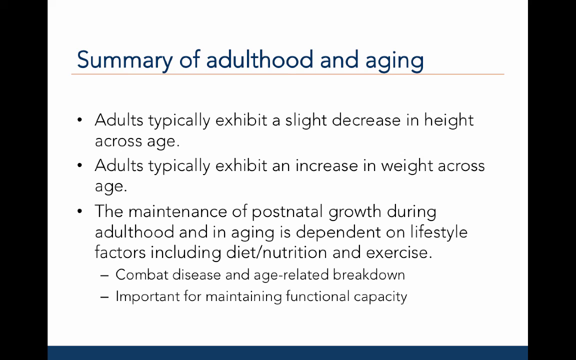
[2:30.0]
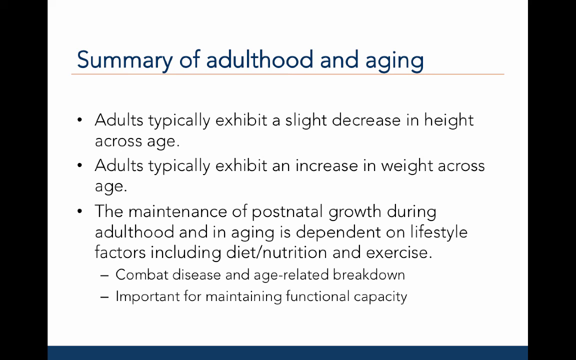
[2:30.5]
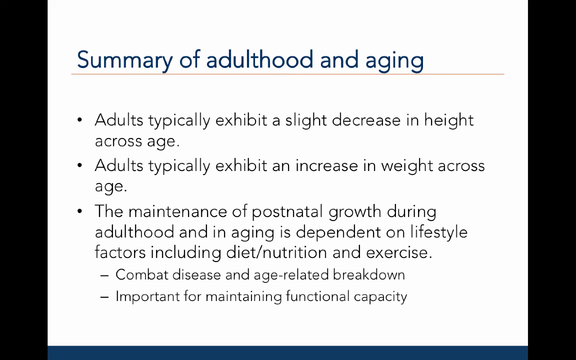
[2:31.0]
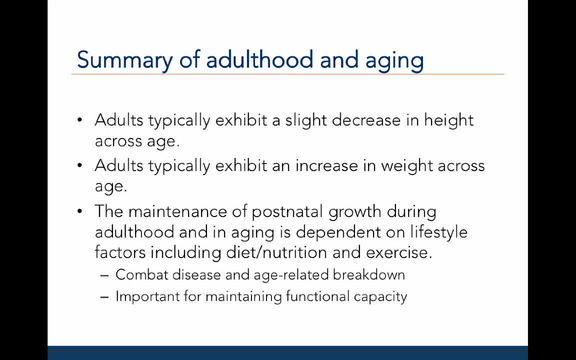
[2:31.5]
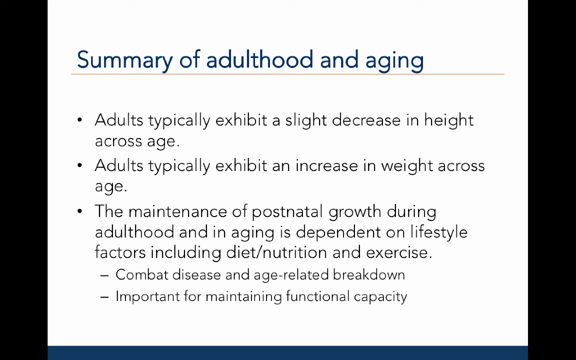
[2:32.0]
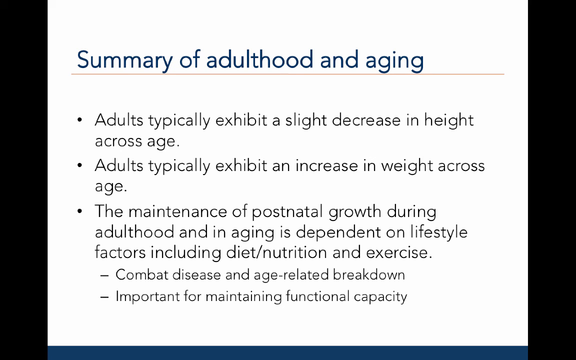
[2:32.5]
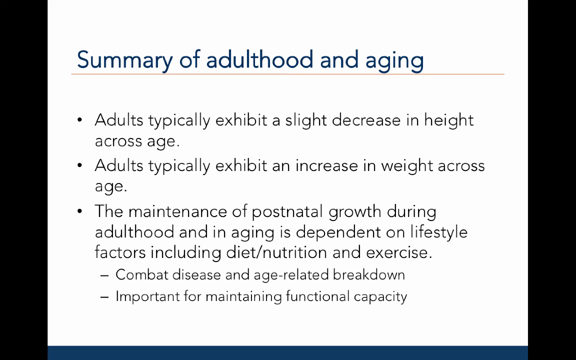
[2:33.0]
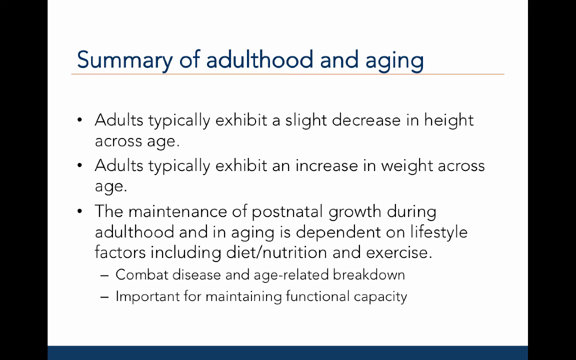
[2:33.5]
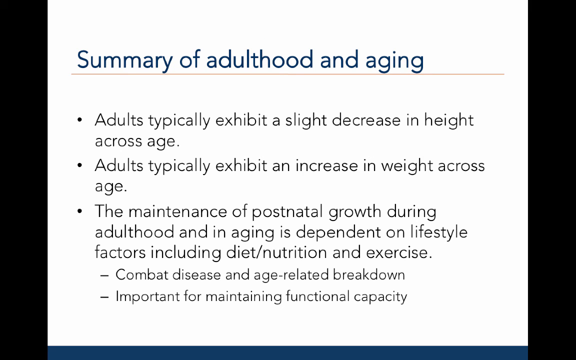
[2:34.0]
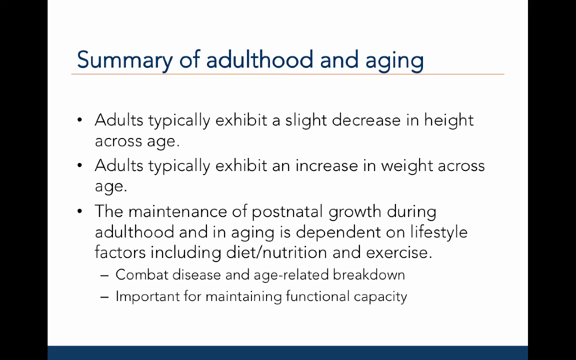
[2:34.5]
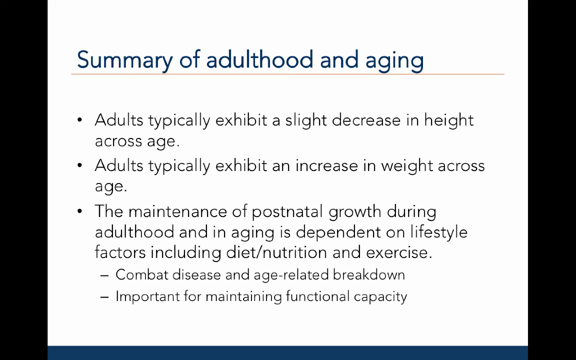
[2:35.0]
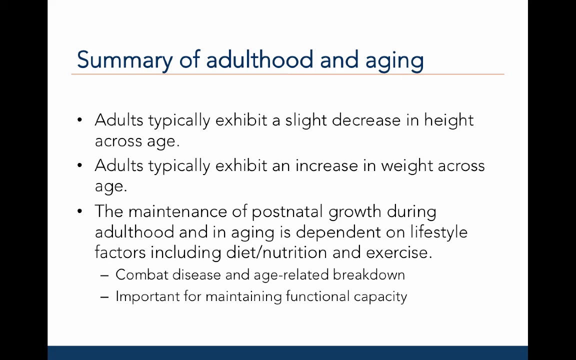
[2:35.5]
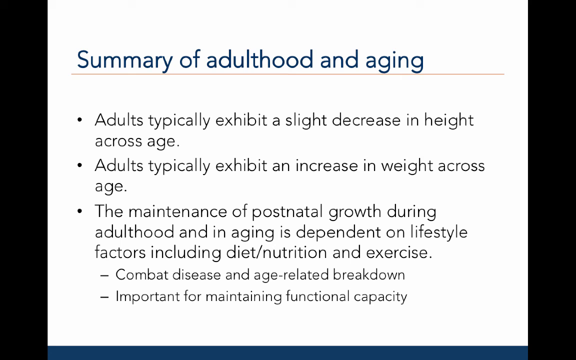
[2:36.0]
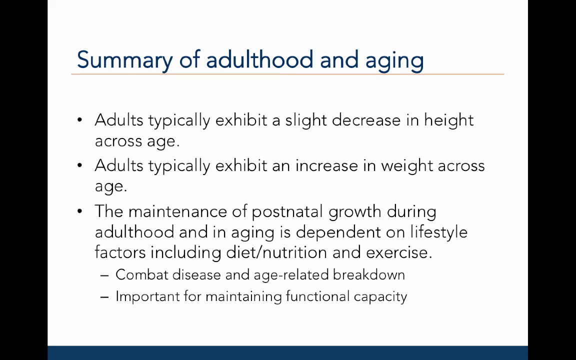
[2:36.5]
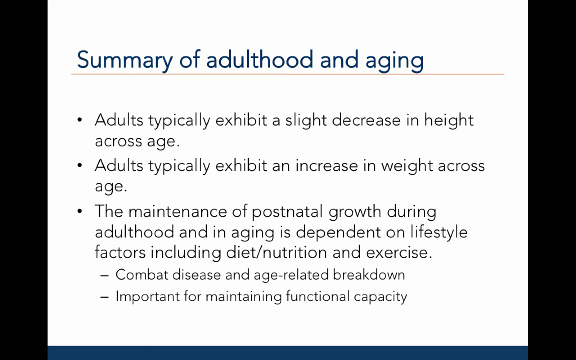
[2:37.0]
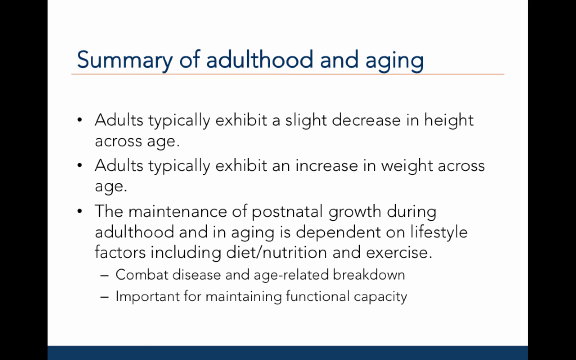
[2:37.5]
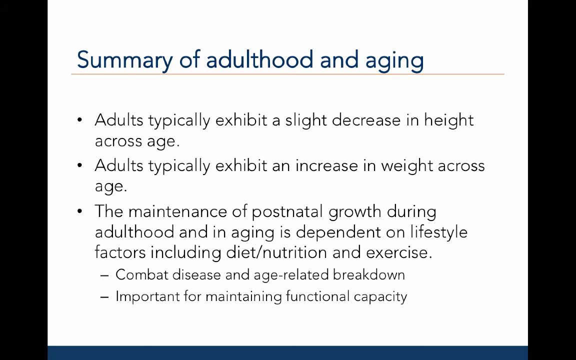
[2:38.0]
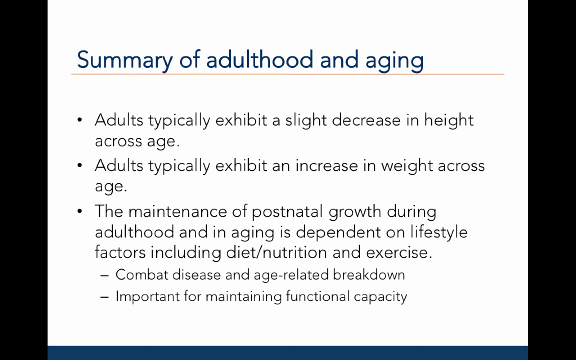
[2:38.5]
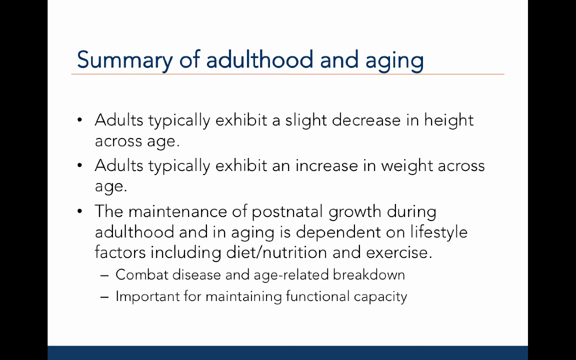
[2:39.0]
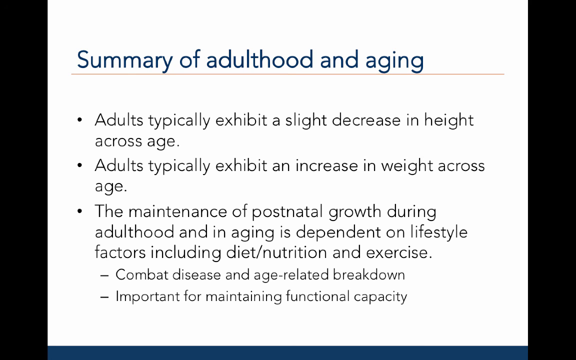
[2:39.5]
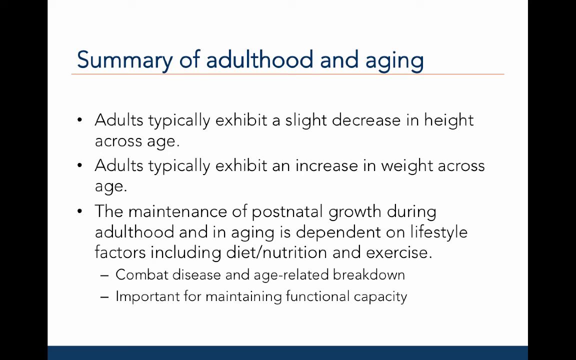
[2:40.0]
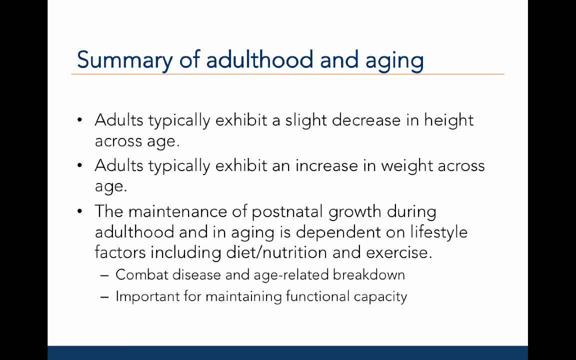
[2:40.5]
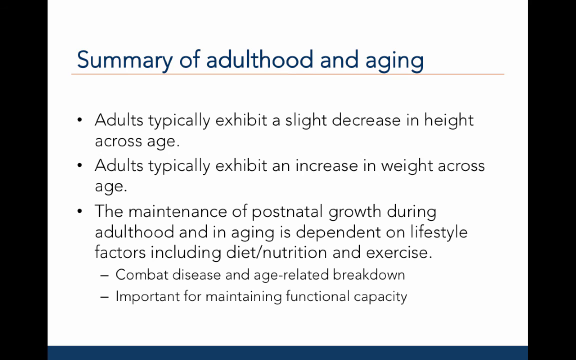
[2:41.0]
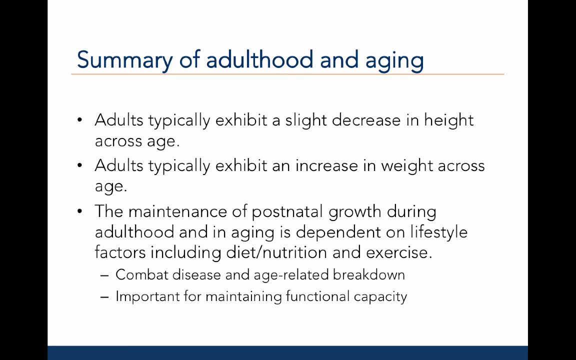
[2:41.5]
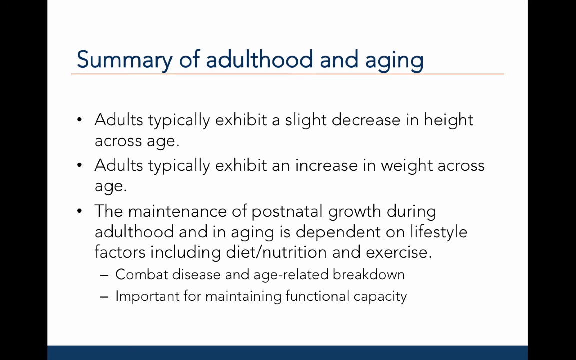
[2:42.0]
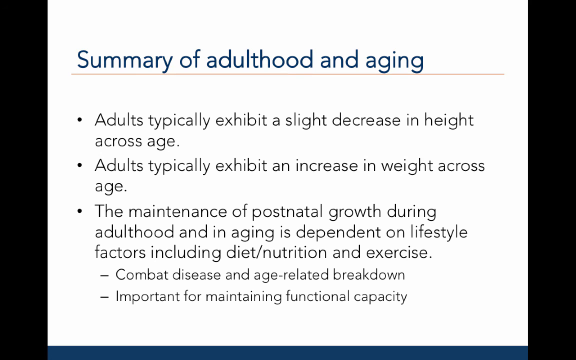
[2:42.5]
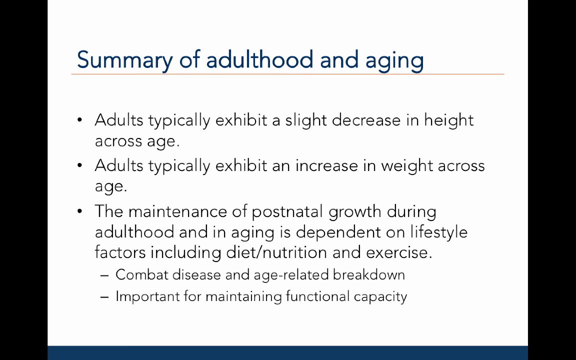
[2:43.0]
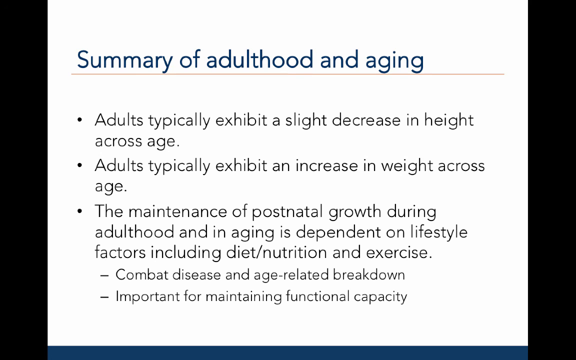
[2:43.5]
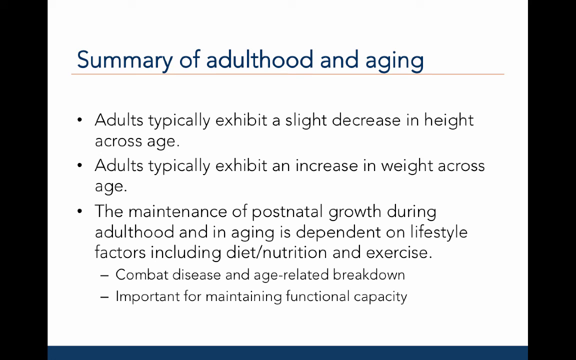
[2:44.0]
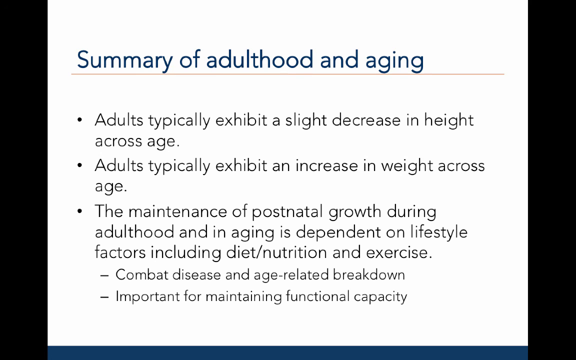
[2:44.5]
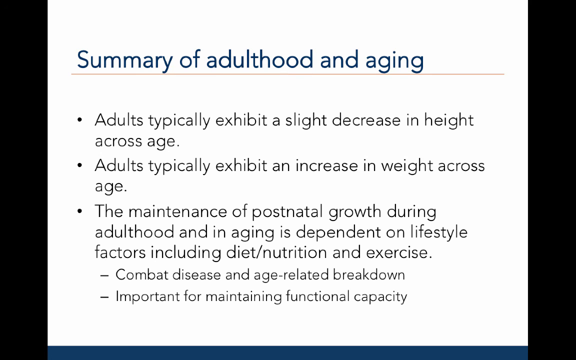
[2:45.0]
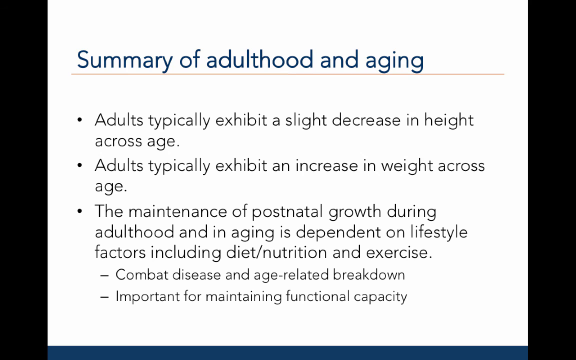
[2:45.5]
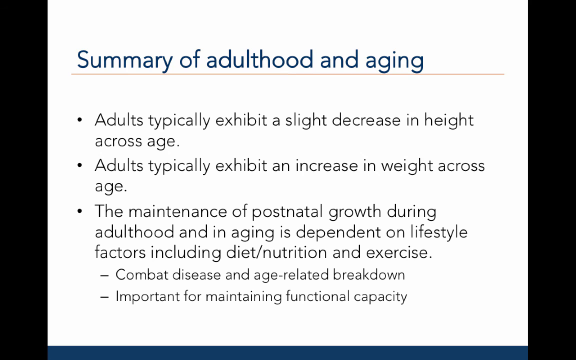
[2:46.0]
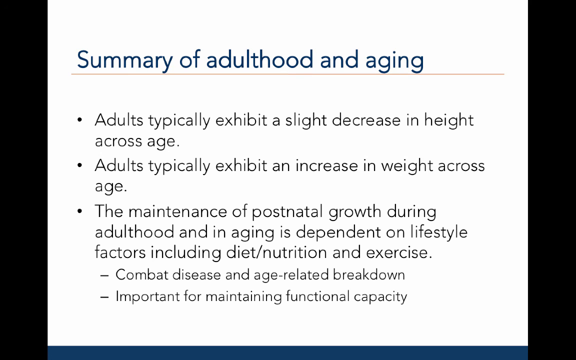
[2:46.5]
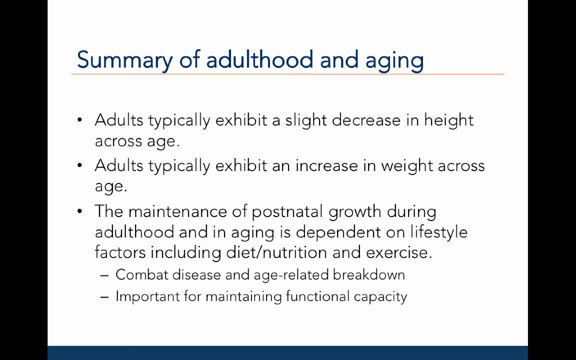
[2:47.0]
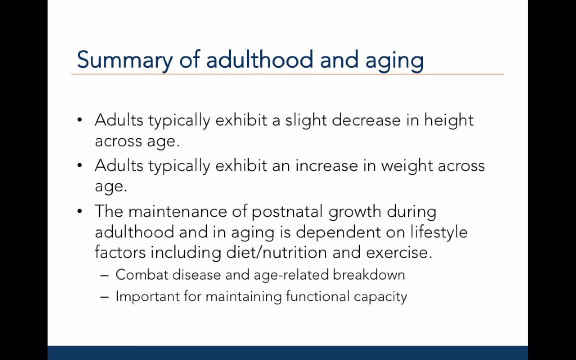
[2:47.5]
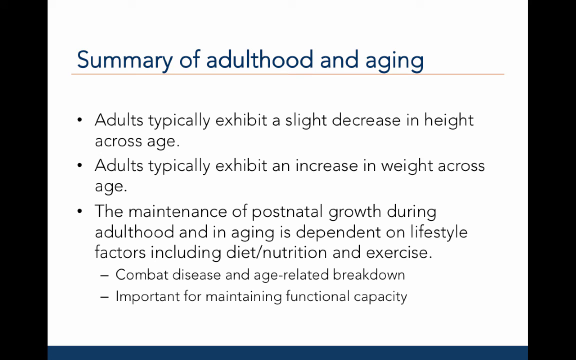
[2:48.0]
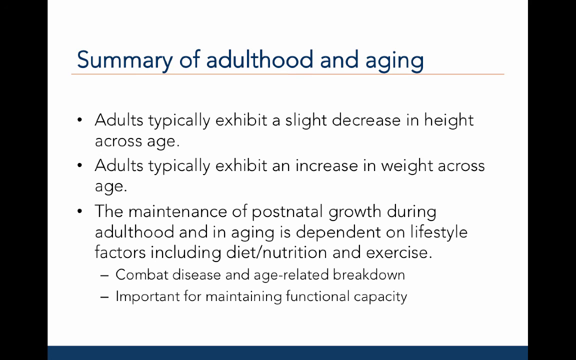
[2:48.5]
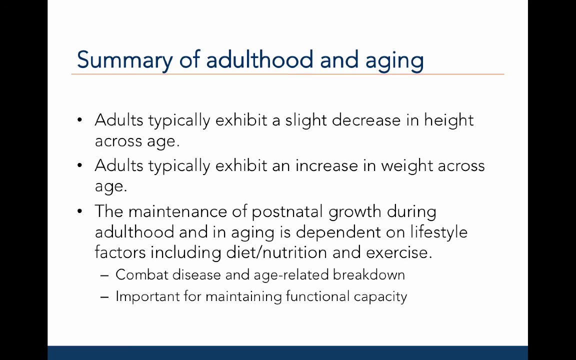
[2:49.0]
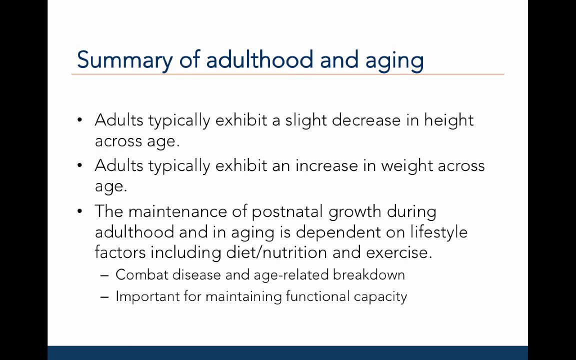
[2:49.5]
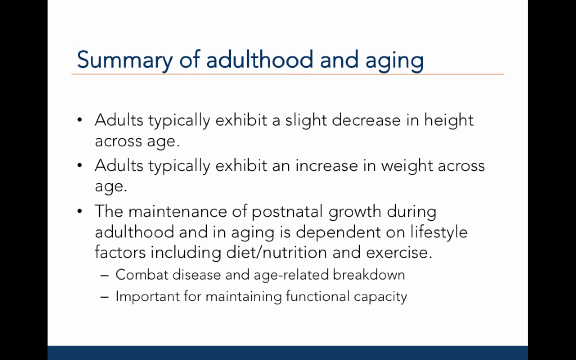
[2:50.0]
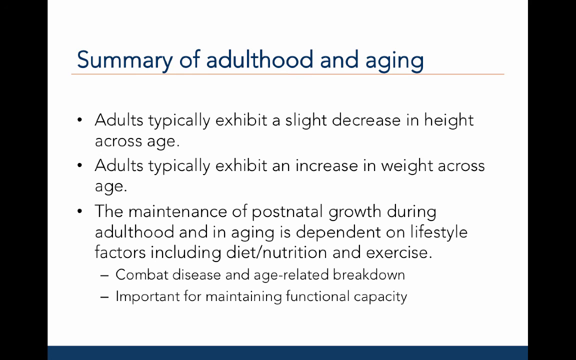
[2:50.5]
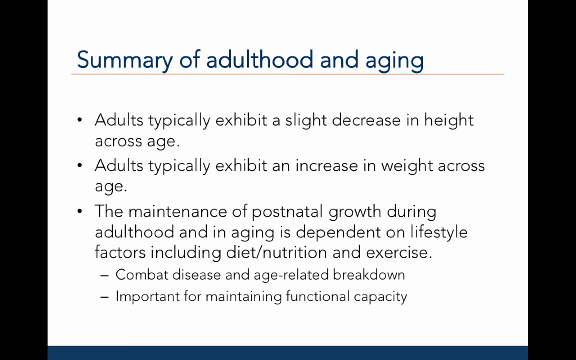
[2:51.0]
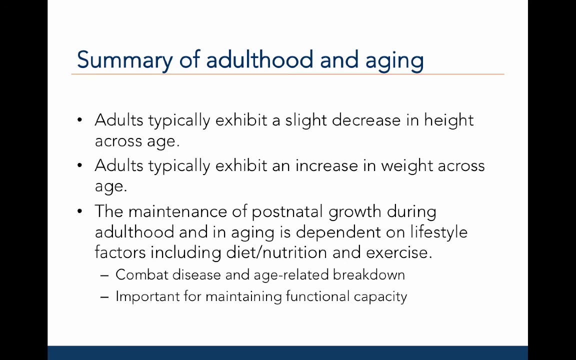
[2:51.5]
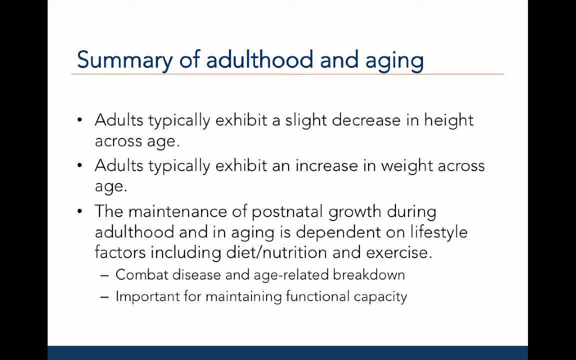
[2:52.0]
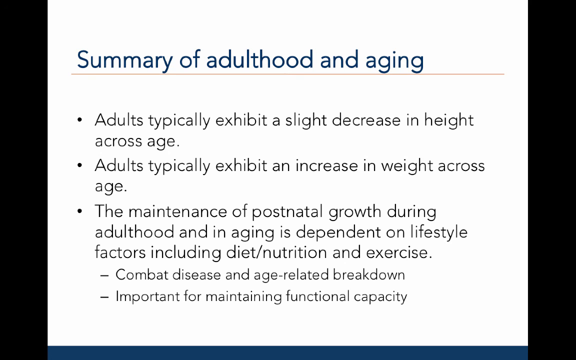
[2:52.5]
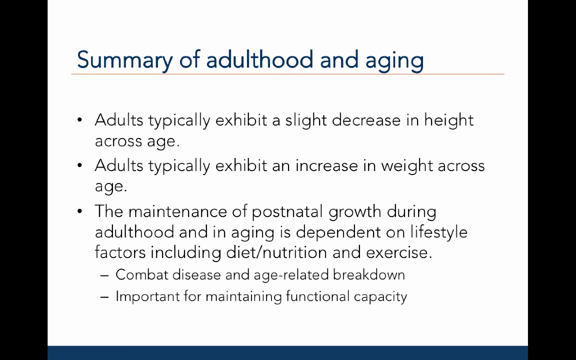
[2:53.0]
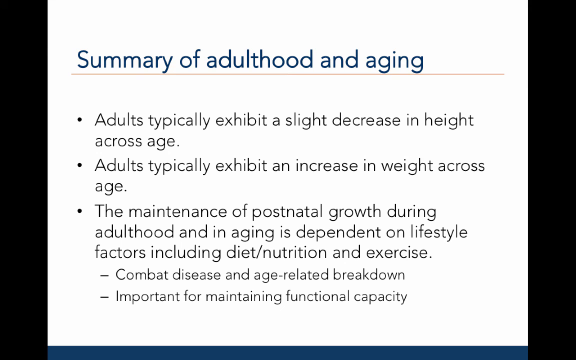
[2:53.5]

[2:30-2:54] The summary of adulthood and aging is on screen: adults typically exhibit a slight decrease in height across age, adults typically exhibit an increase in weight across age, the maintenance of postnatal growth during adulthood and in aging depends on lifestyle factors including diet or nutrition and exercise, and the highlights mention combating disease and age-related breakdowns as important for maintaining functional capacity.